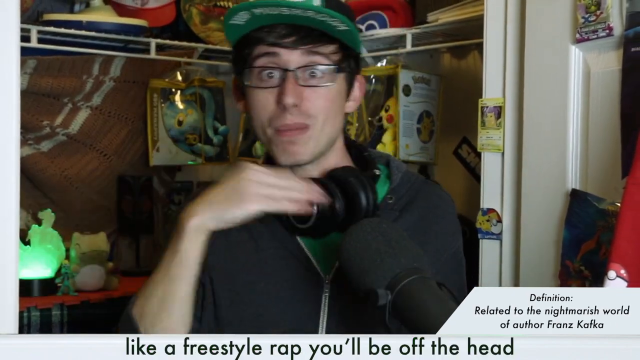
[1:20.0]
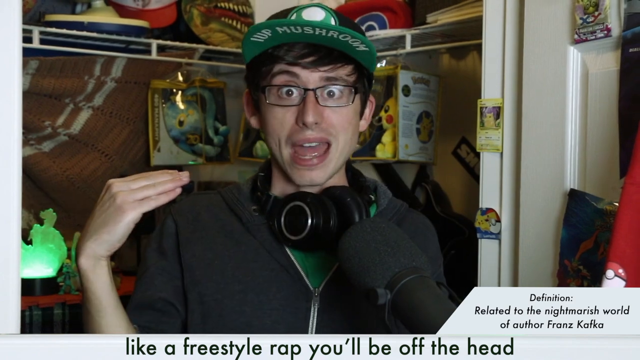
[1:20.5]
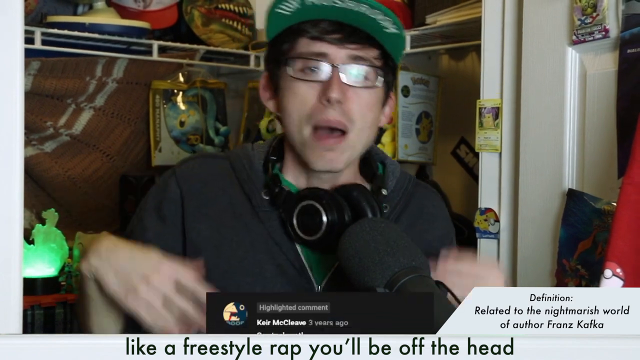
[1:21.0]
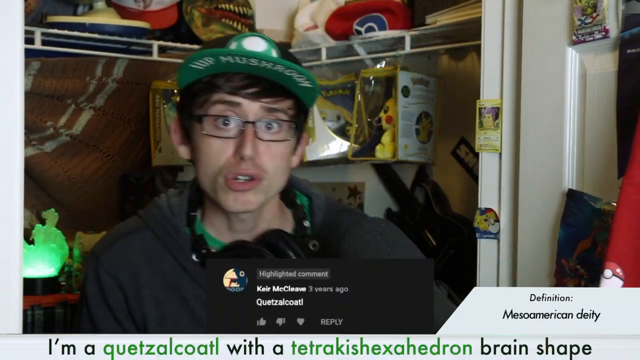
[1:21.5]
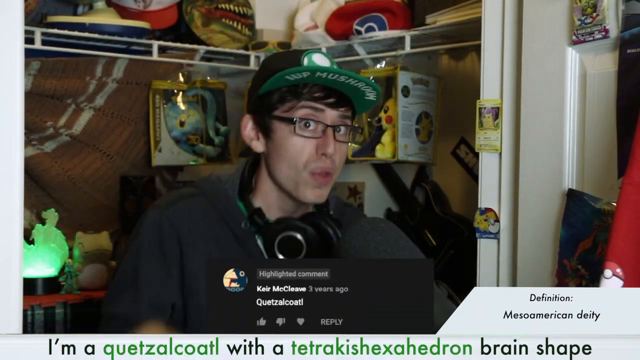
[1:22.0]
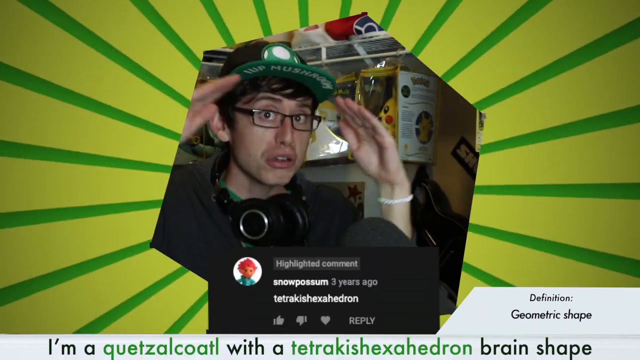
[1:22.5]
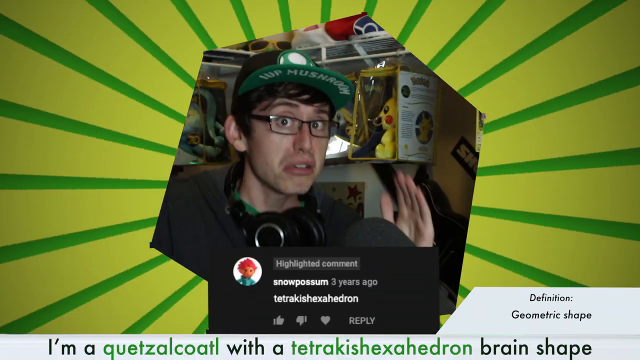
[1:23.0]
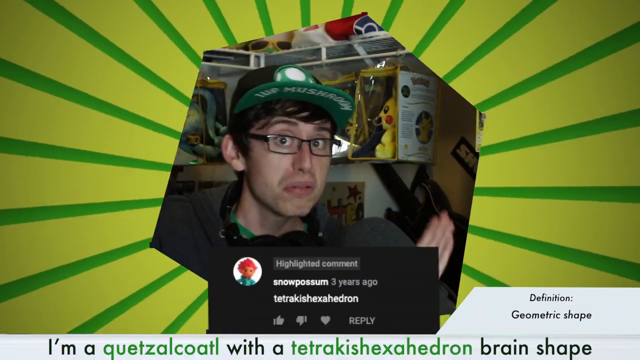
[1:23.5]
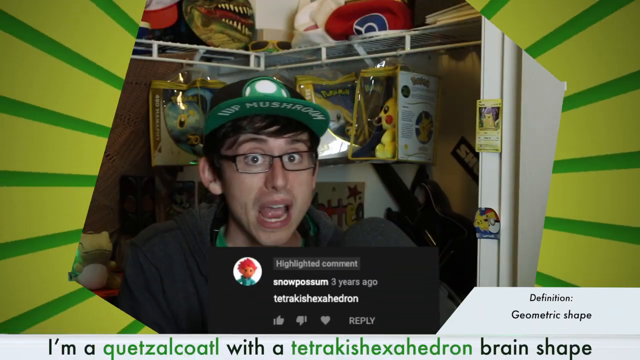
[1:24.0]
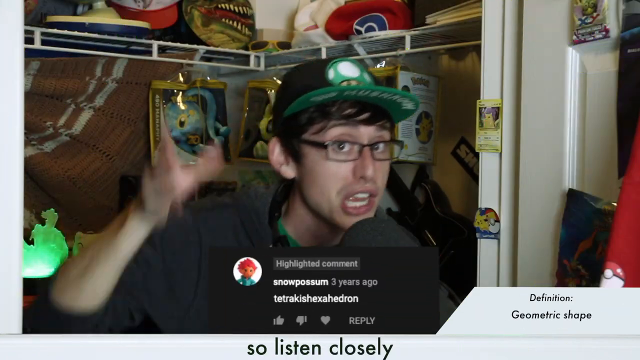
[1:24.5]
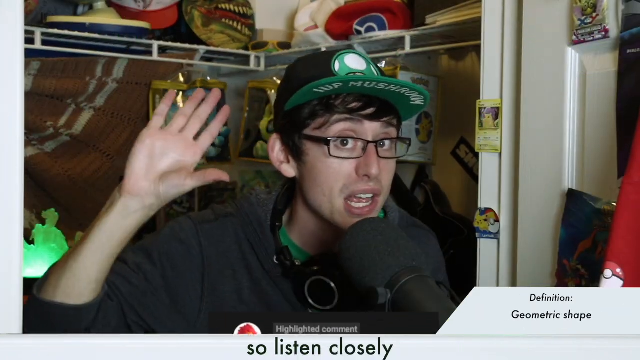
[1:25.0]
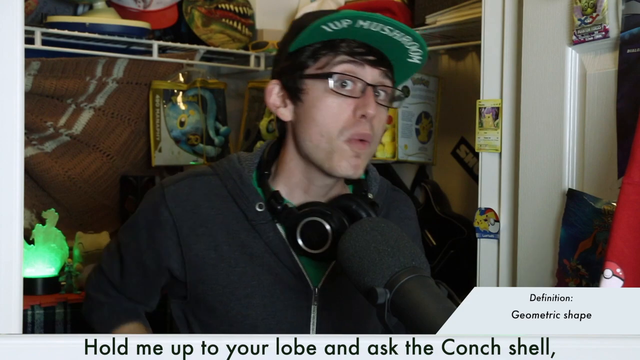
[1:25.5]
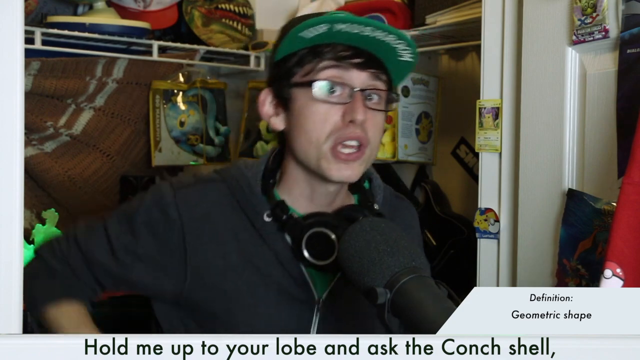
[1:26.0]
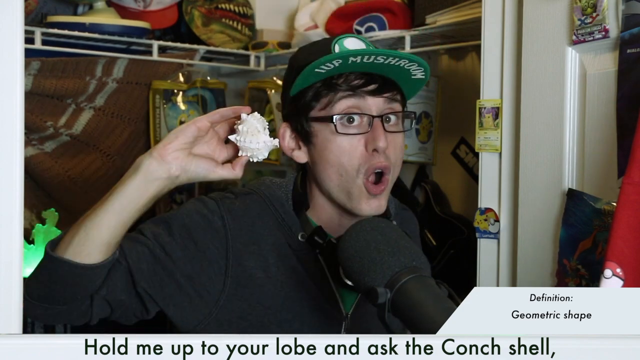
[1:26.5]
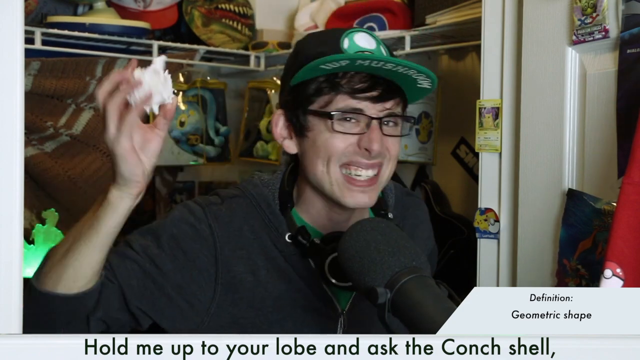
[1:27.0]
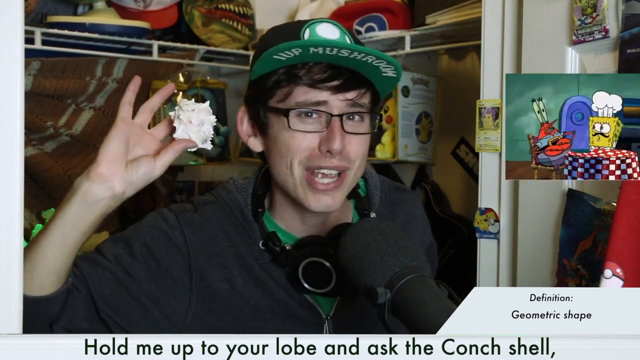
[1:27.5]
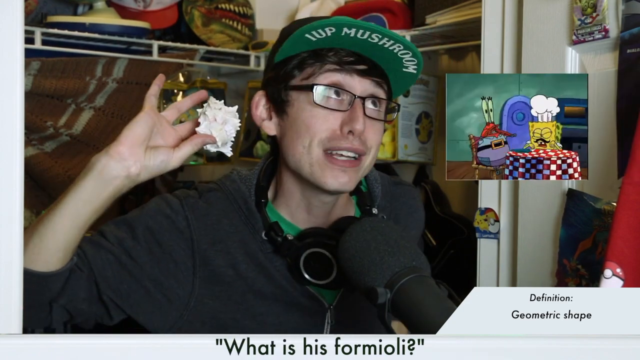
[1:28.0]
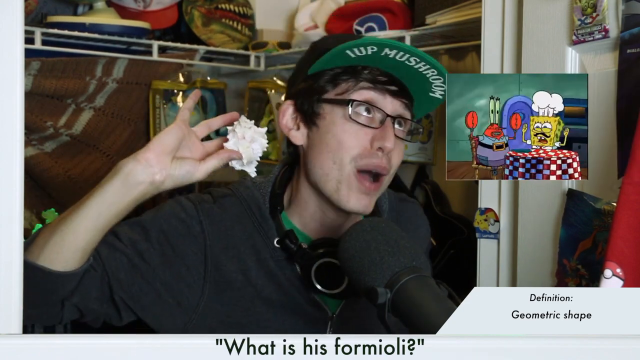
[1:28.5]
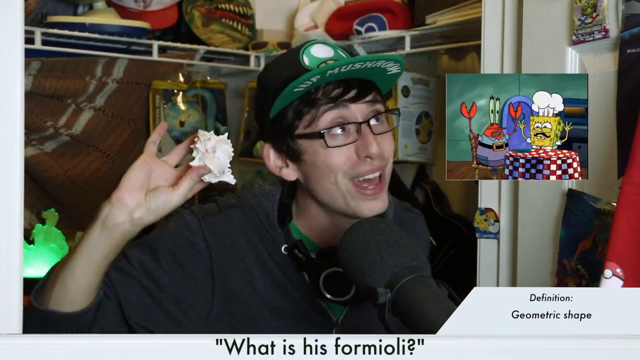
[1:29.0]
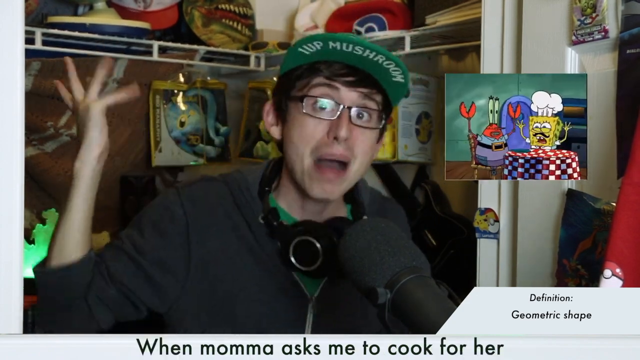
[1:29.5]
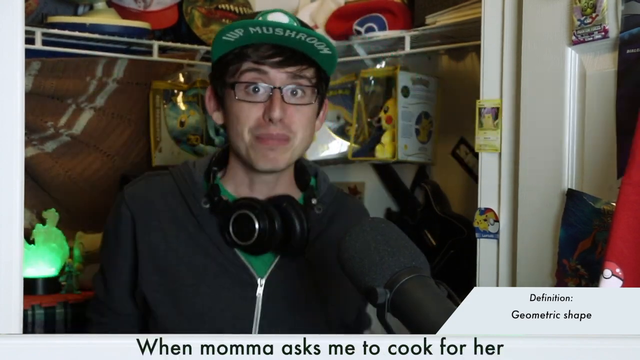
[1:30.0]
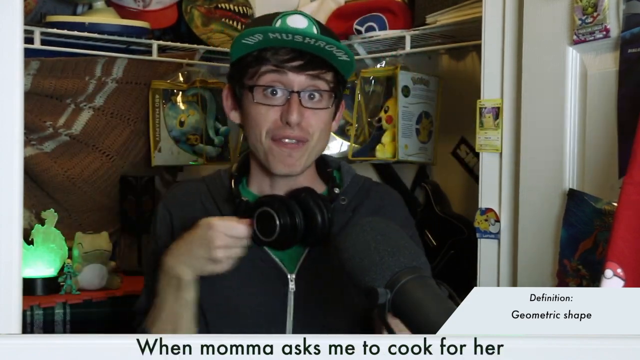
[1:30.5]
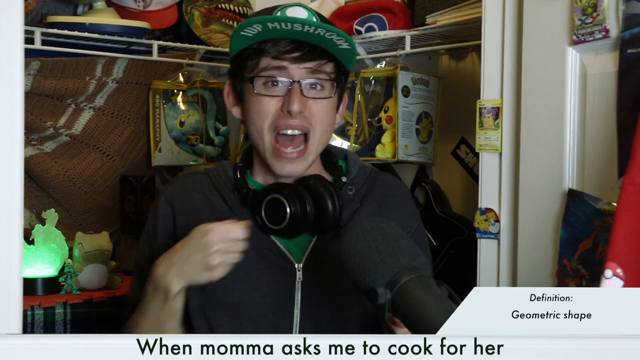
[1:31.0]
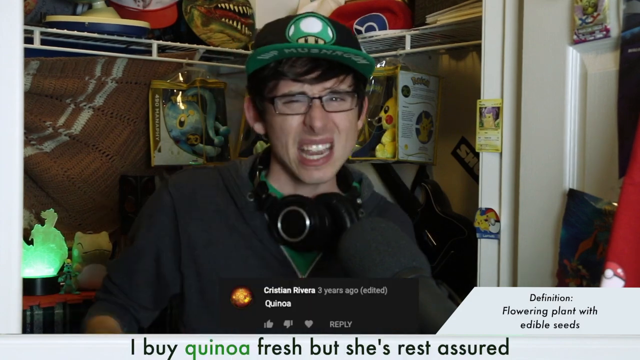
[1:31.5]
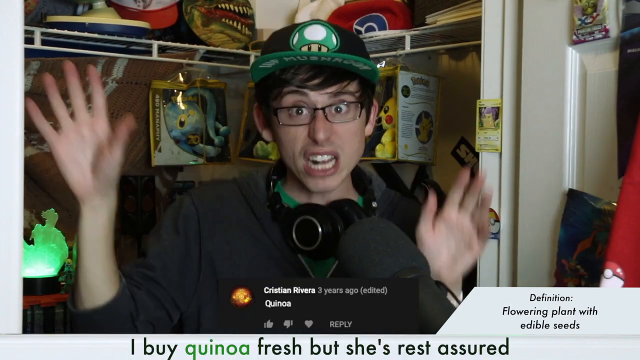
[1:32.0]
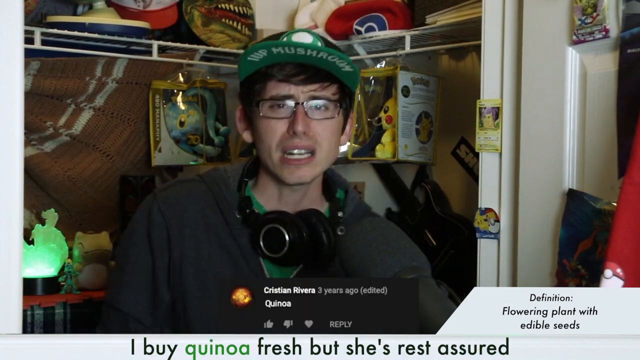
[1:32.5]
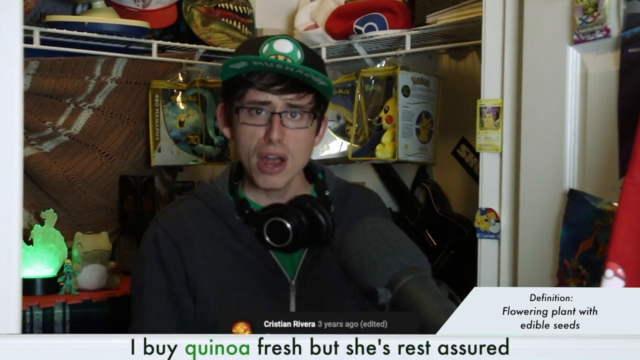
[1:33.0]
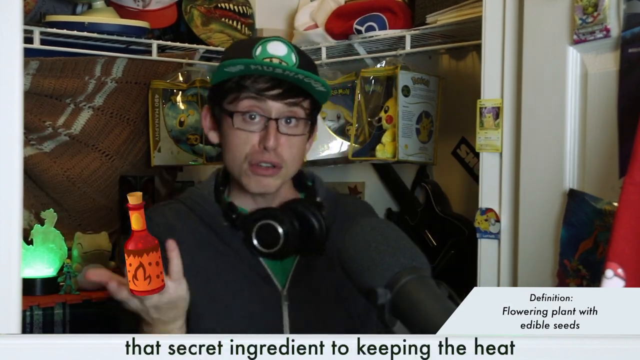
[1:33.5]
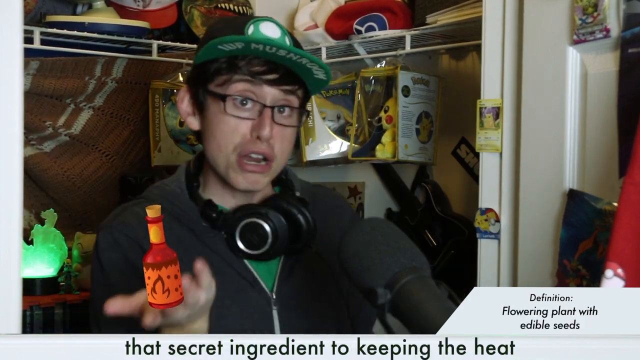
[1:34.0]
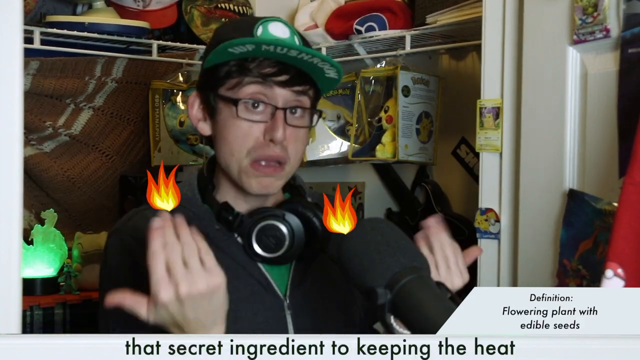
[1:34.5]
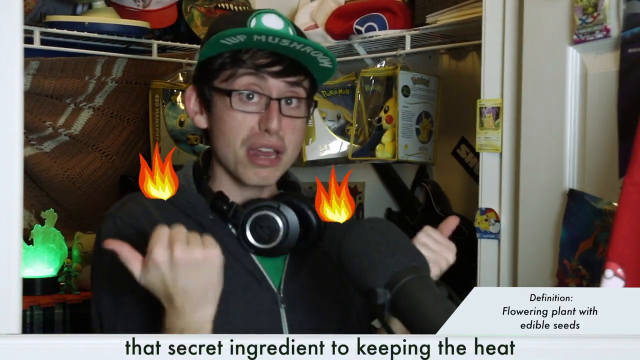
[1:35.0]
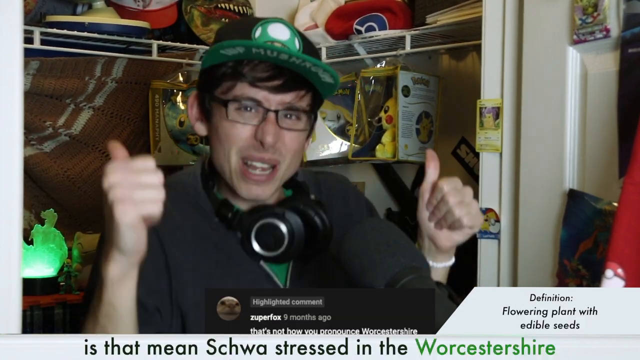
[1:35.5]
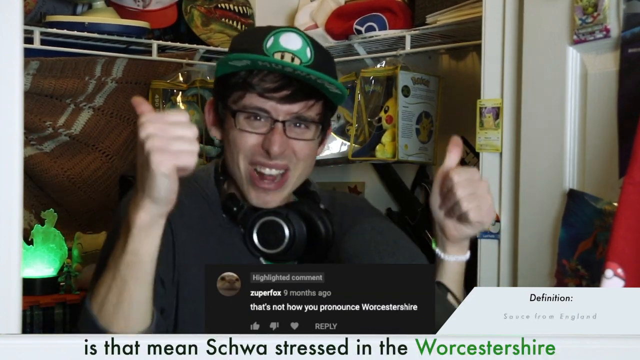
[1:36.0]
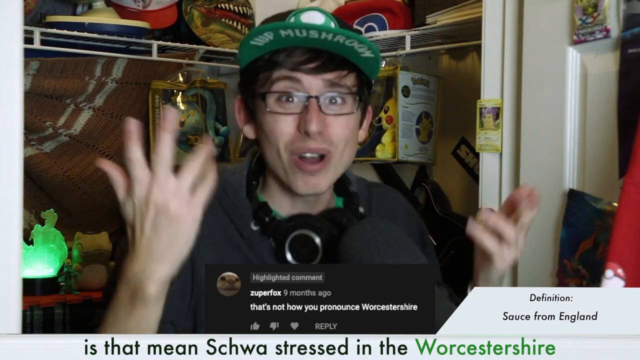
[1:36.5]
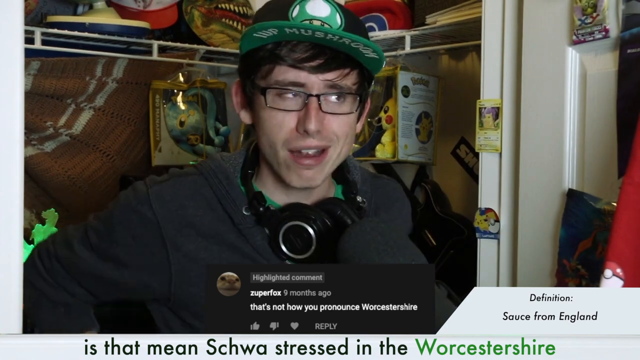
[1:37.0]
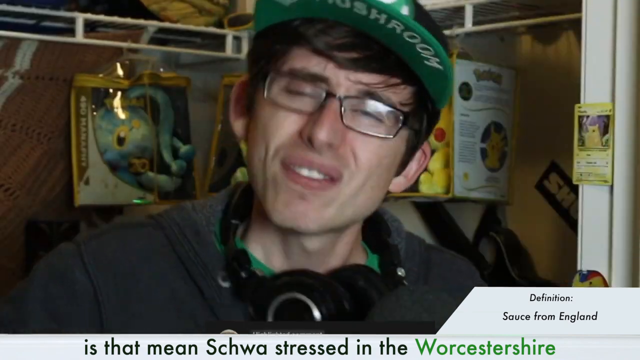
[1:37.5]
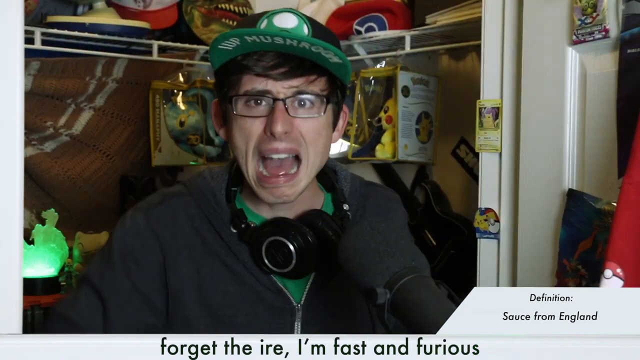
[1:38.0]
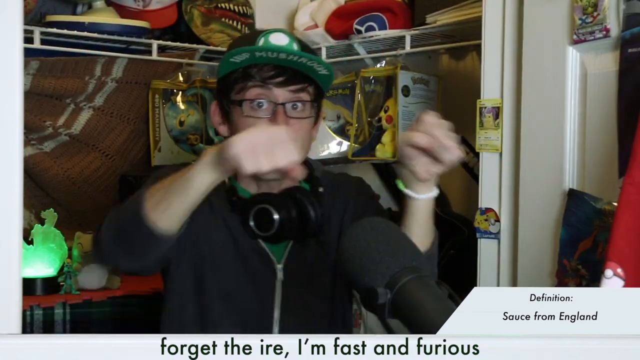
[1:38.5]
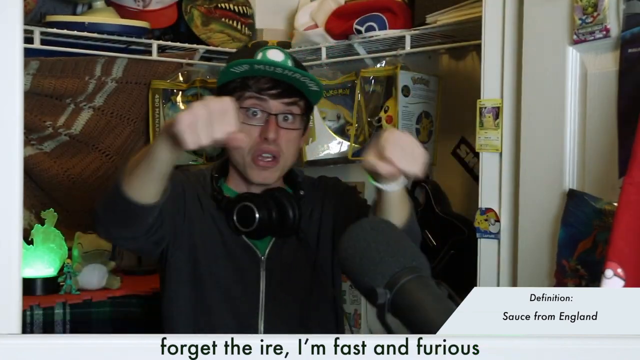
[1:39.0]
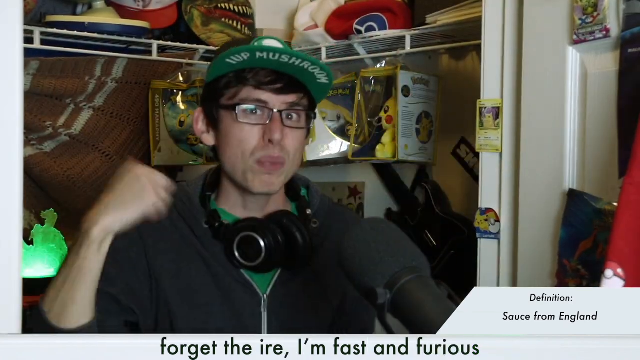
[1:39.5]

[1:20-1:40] The man moves his right hand as if slicing his neck. A comment box from snowpossum comes up reading "tetrakishexahedron", and the definition changes. The screen adjusts to show a hexagon around the man, with two colours, yellow and green, radiating out from the outside of the hexagon like a sun. The screen returns to normal and the man brings up a conch in his right hand. As he raps holding the conch, an image of SpongeBob with Mr. Crab appears on the right side of the screen. He drops the conch and the SpongeBob image disappears. The man keeps dancing as the comment changes to the word "Quinoa" and the definition changes. As he raps about quinoa, two small fire emojis appear, and the comment changes to "that's not how you pronounce Worcestershire", with the definition changing to "sauce from England".